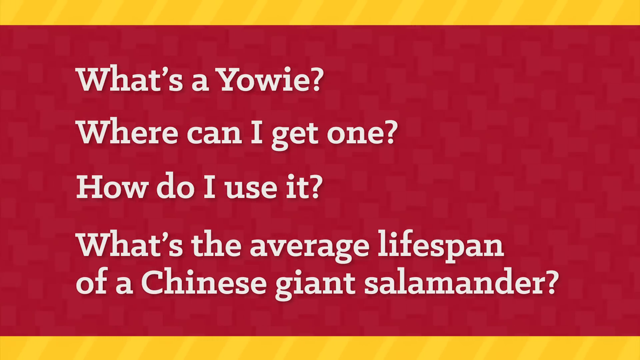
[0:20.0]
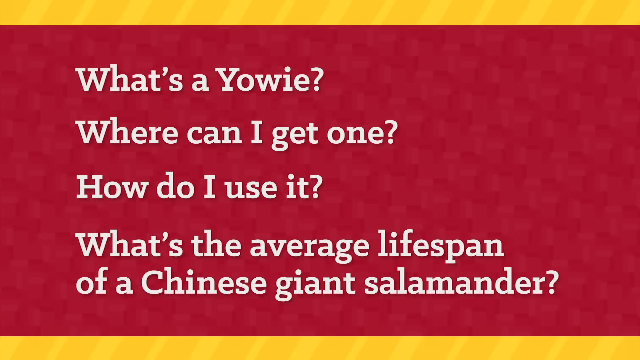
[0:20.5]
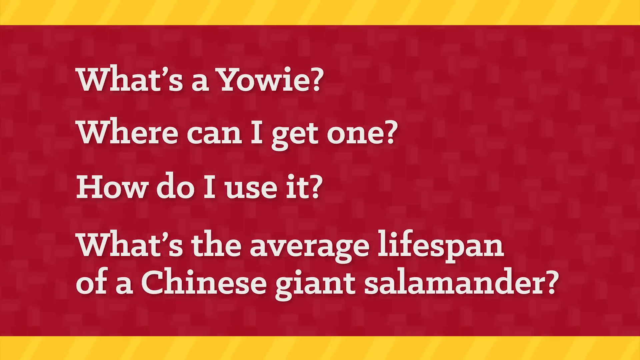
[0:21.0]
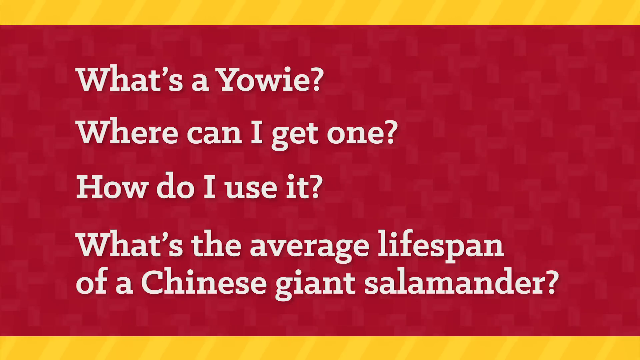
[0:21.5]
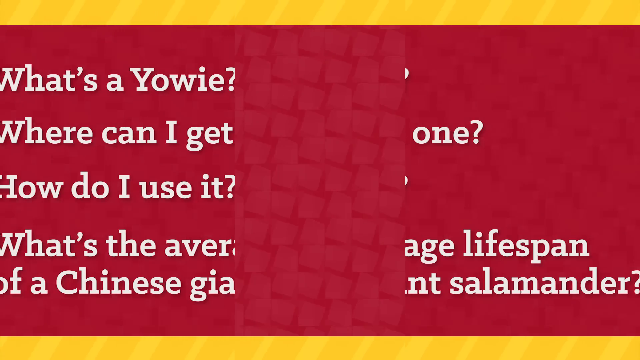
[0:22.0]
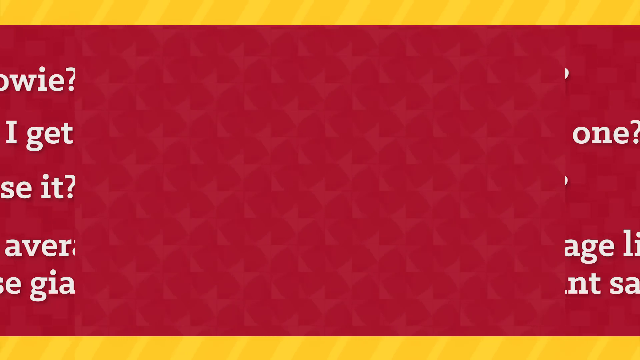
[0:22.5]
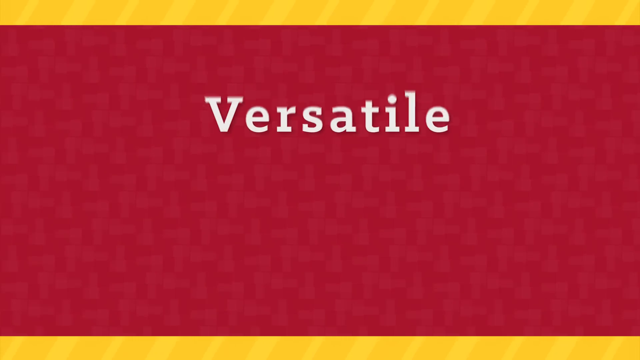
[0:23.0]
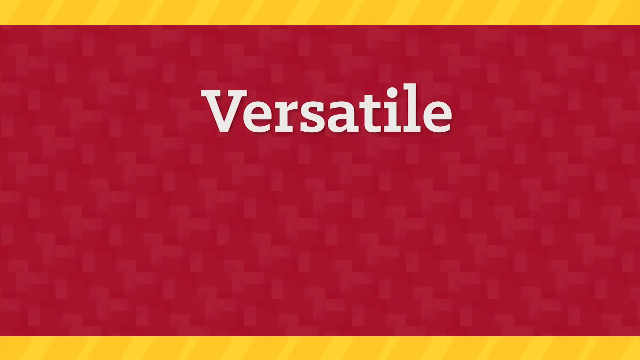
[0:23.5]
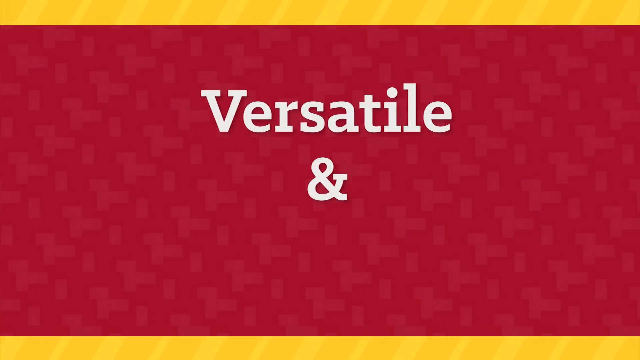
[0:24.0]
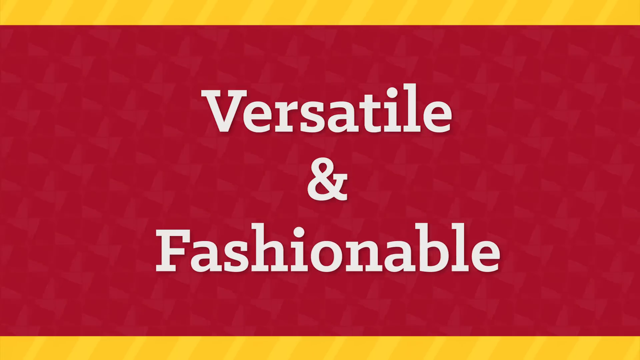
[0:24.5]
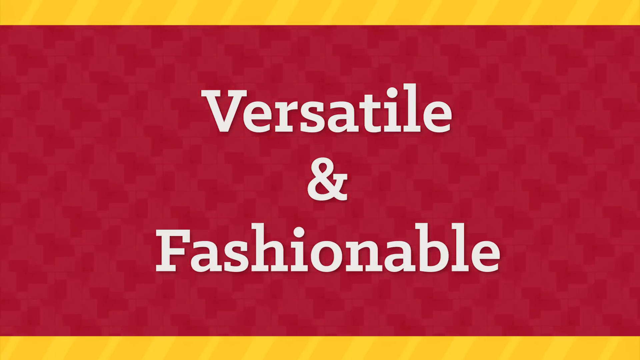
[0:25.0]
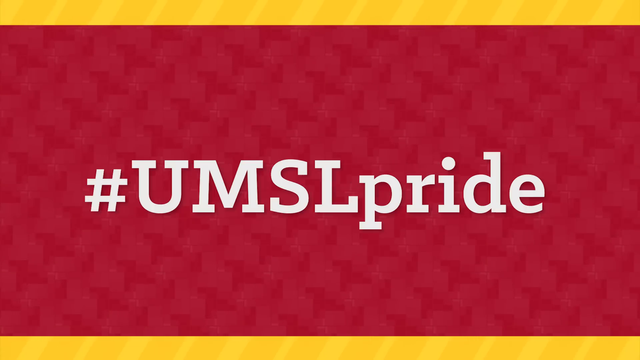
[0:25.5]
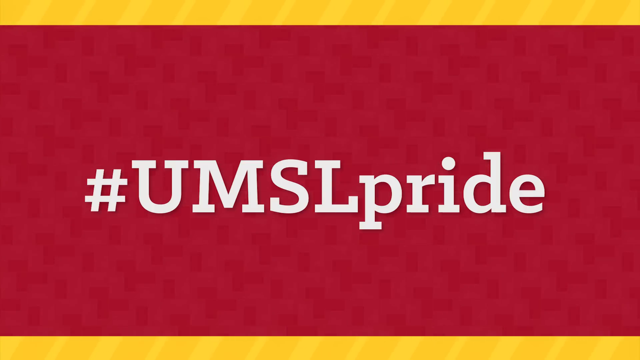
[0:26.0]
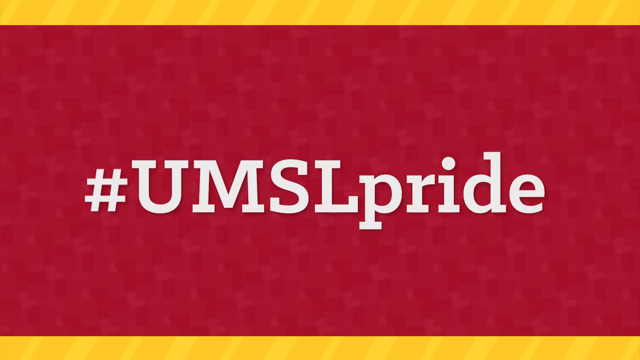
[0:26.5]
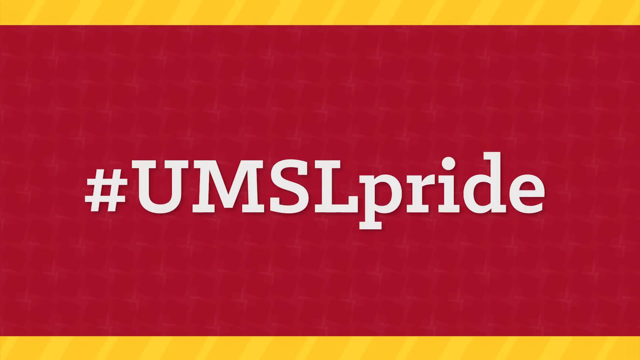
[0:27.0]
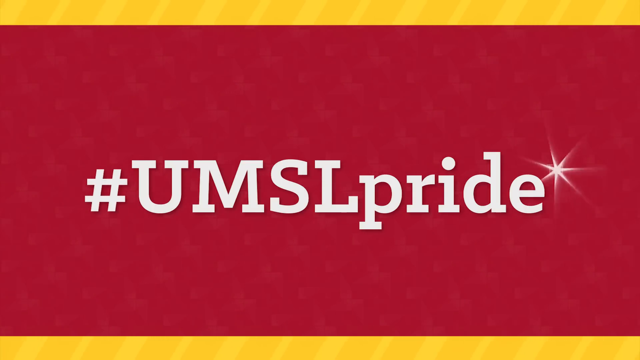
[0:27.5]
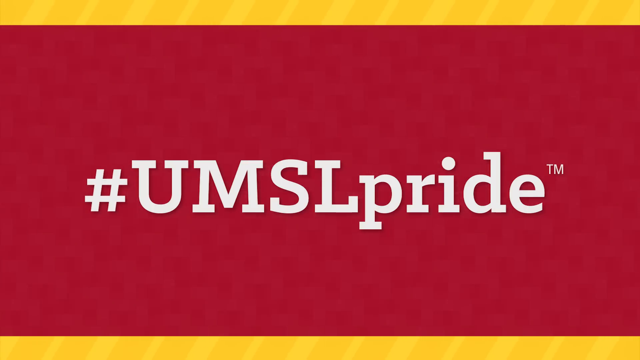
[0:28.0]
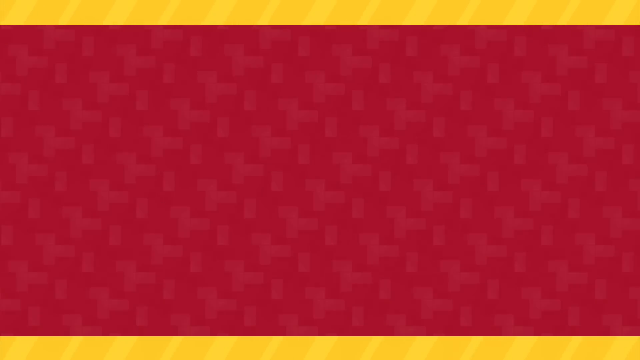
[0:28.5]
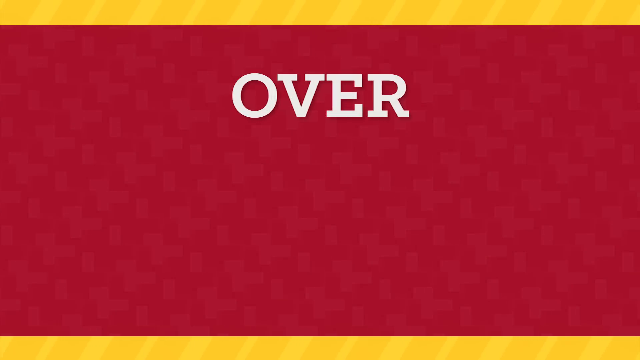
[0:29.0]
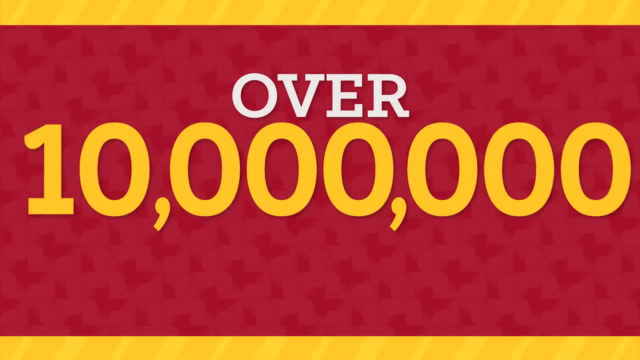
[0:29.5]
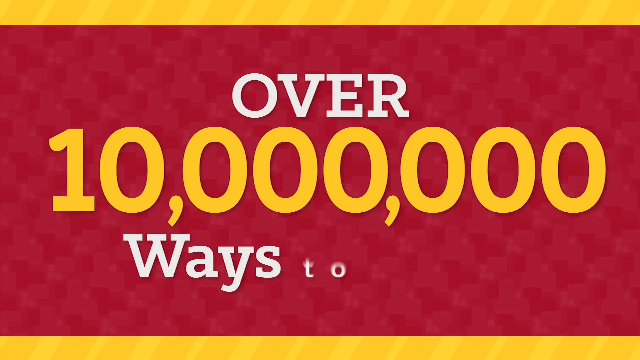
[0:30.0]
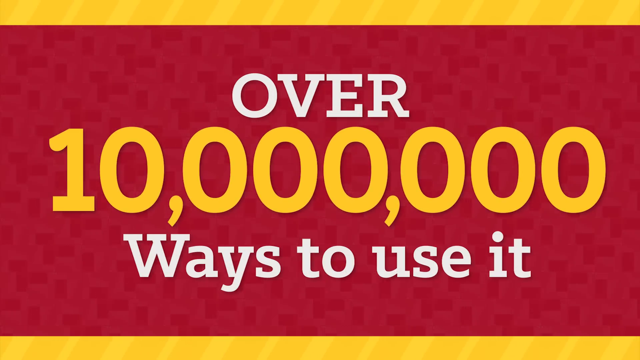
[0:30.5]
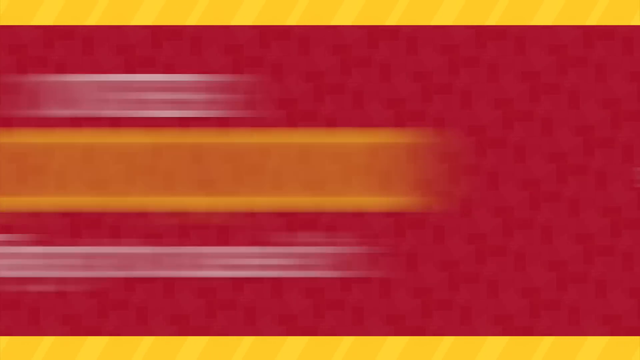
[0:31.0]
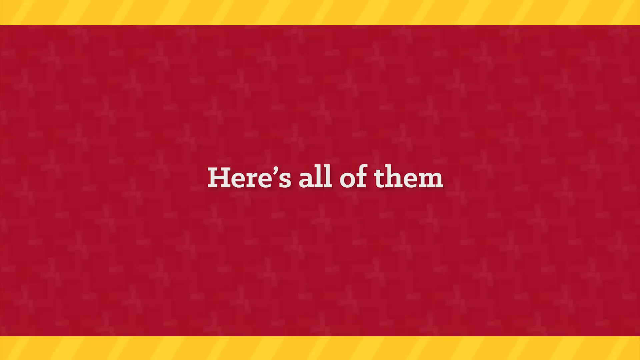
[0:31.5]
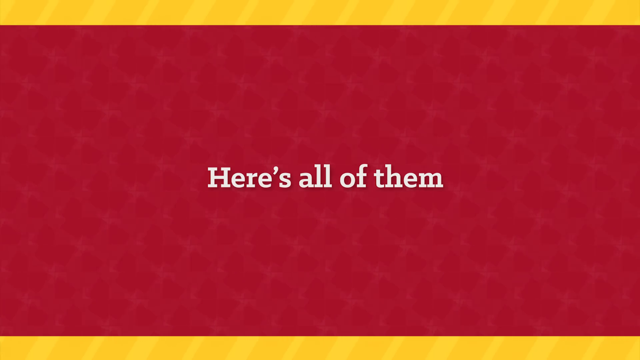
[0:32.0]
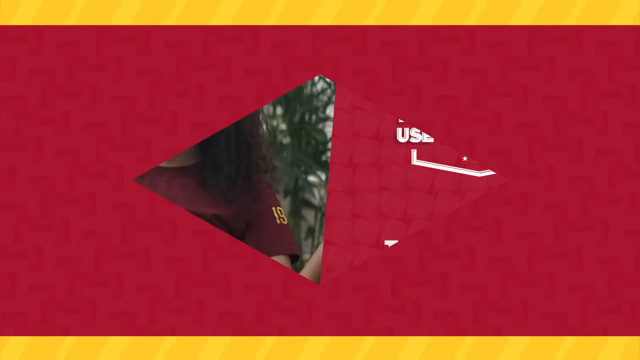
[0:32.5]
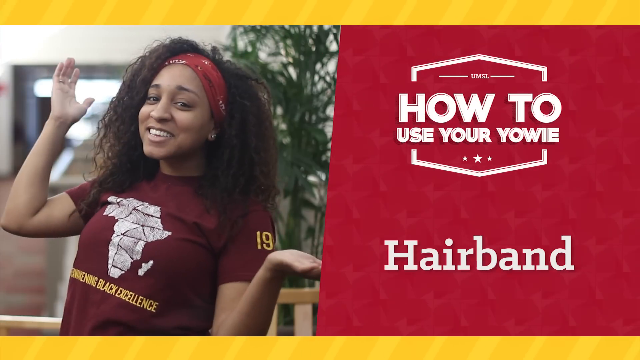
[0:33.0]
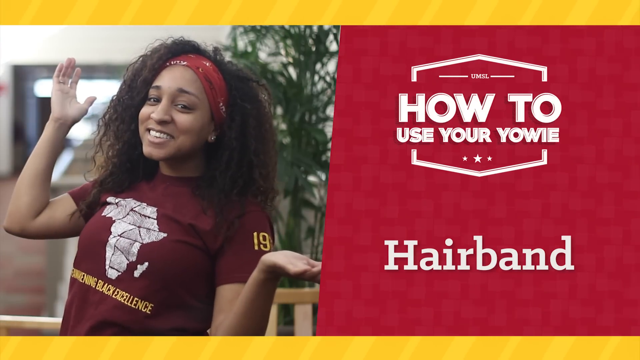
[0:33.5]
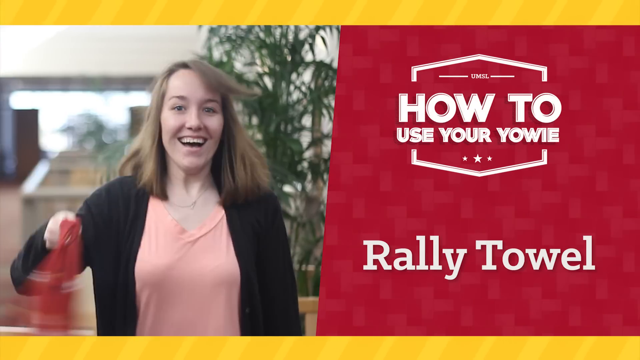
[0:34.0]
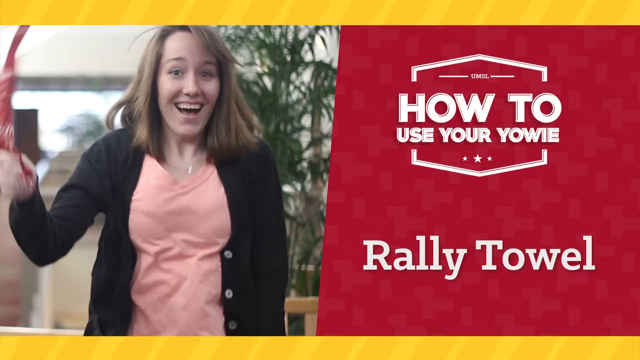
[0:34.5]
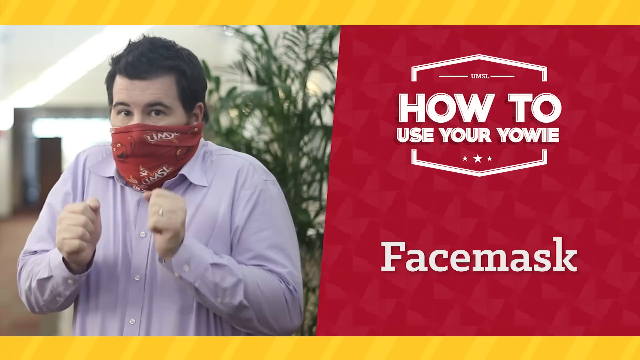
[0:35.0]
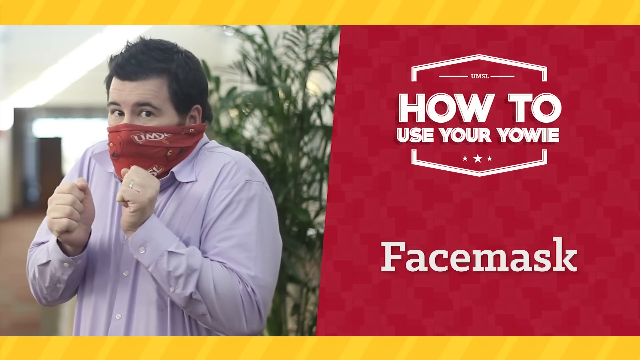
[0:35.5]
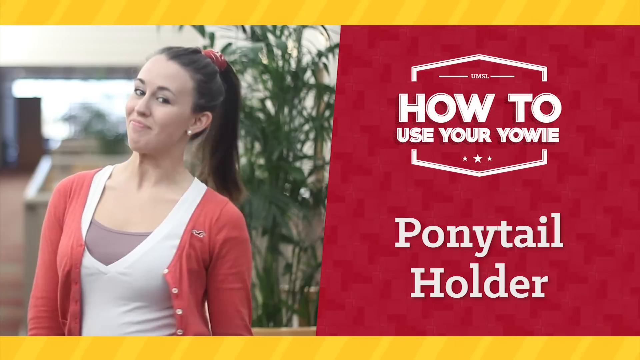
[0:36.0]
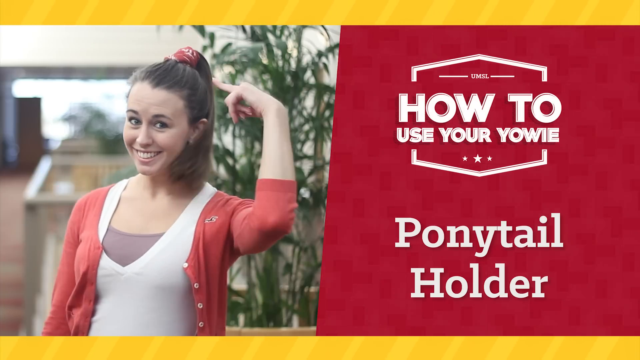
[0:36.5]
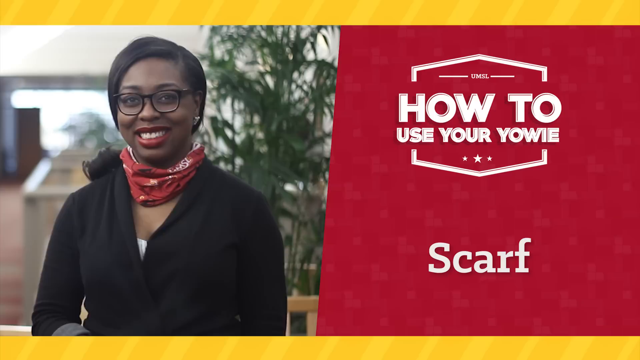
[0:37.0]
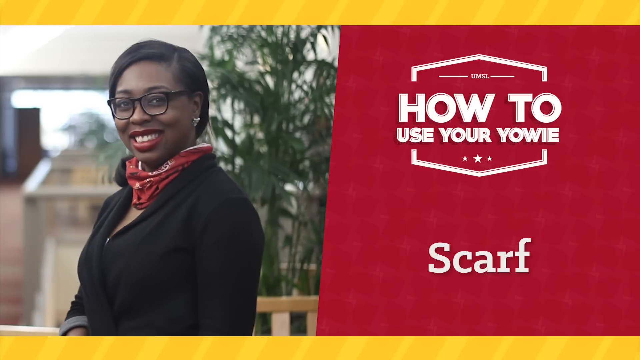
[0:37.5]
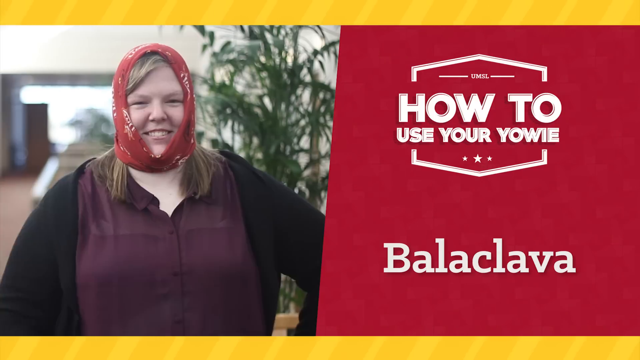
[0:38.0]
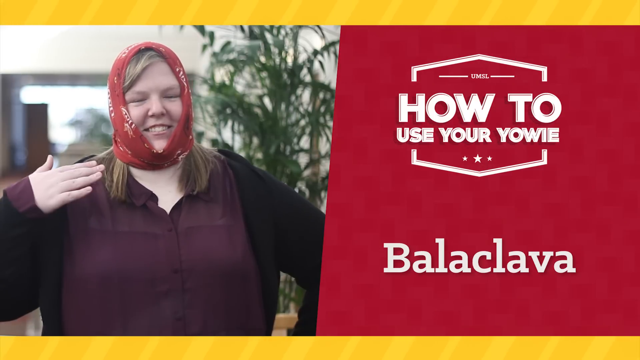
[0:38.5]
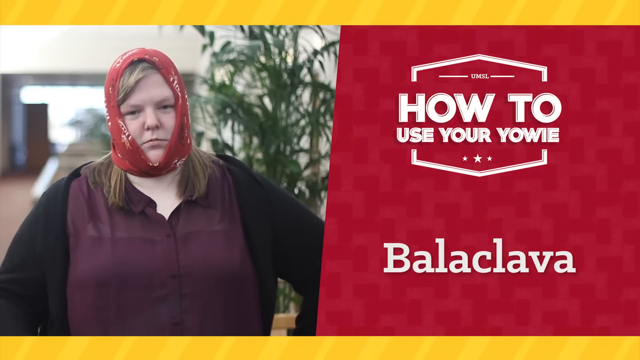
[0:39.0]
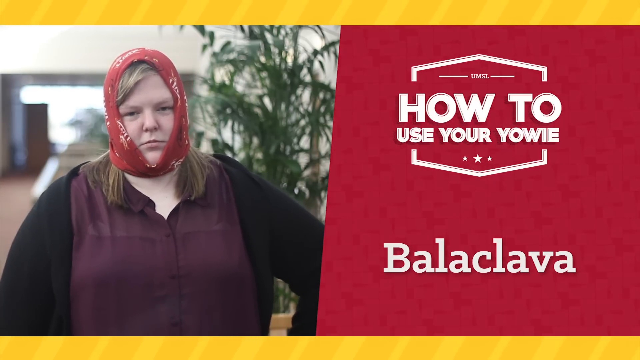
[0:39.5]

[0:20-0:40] On a maroon screen with a yellow line across the top, white text lists the questions "what is a yowie, where can I get one, how do I use it, what is the average lifespan of a Chinese salamander." On the next screen the word "versatile" pops up in white, followed by "fashionable," and then "#UMS pride" appears in the middle of the screen. Next comes text about the many ways to use it. A Black girl with black hair appears, wearing a maroon headband and a maroon shirt that says "black excellence"; to her right, text reads "how to use your yowie hairband." A white girl in a black sweater with a pink top then jumps up and down, swinging what appears to be the yowie in circles. A white boy with brown hair and a purple shirt follows, wearing his yowie over his face as a mask. Another white girl wears hers in a ponytail and has on a red sweater with a white shirt. A Black woman with glasses and a black jacket wears it as a scarf. Finally, another girl appears with it around her head.